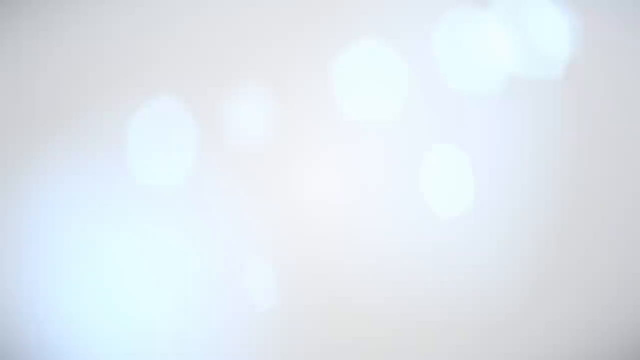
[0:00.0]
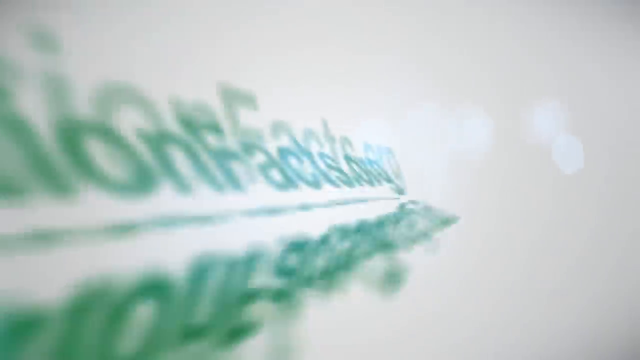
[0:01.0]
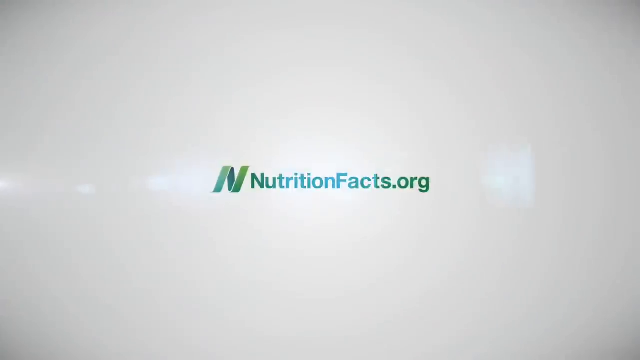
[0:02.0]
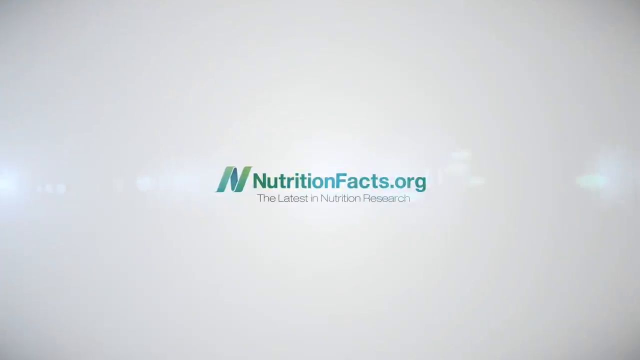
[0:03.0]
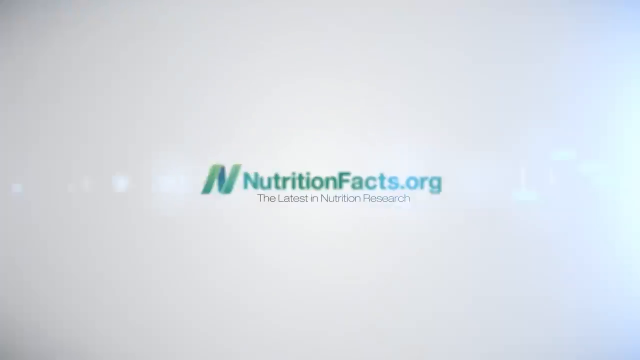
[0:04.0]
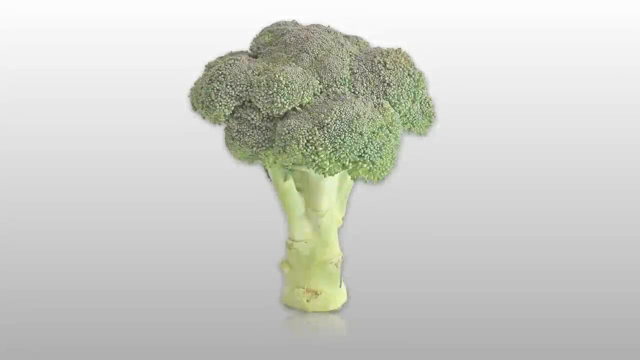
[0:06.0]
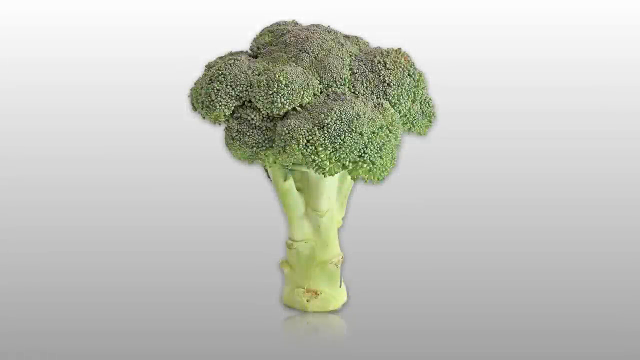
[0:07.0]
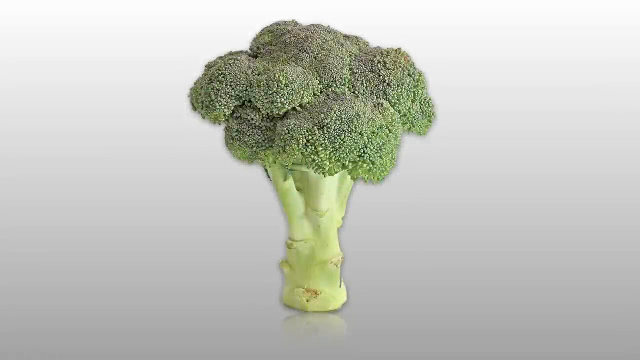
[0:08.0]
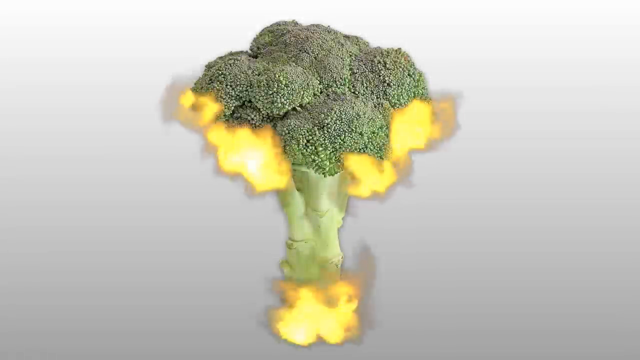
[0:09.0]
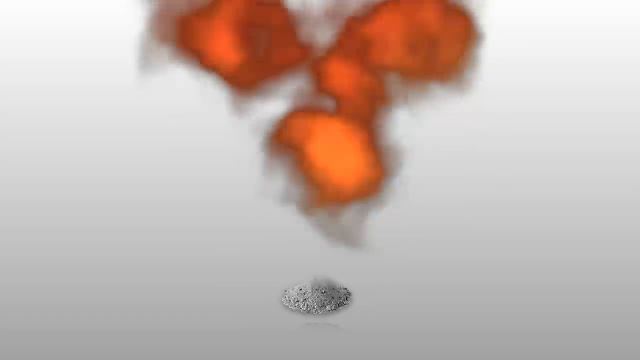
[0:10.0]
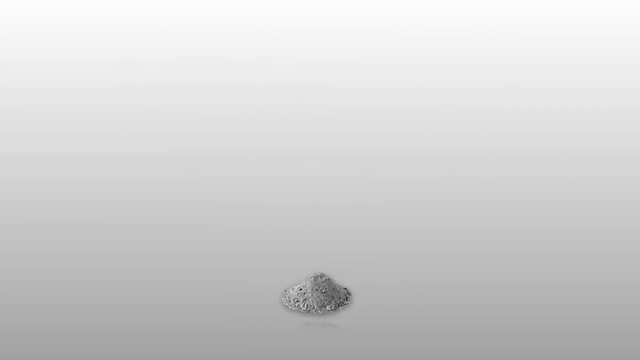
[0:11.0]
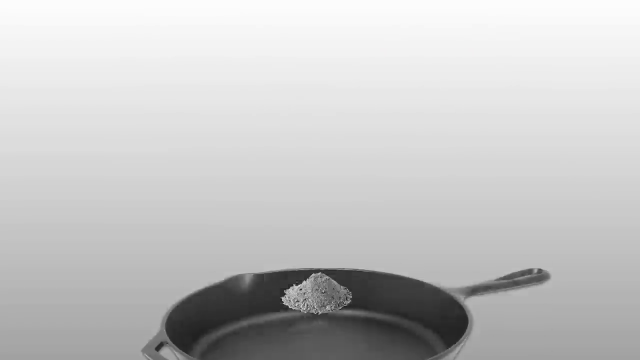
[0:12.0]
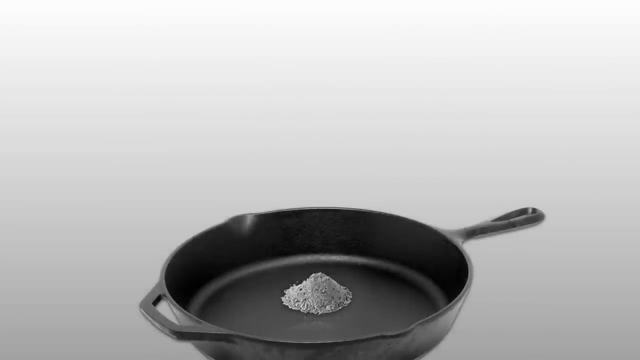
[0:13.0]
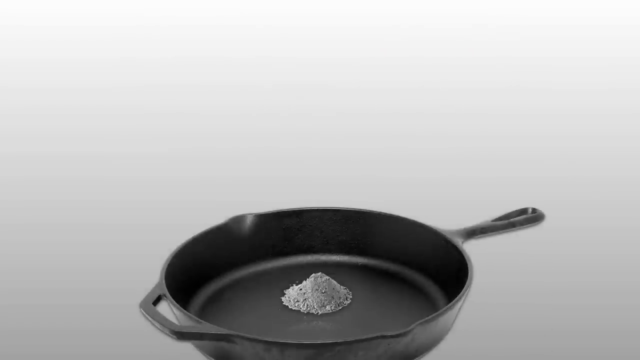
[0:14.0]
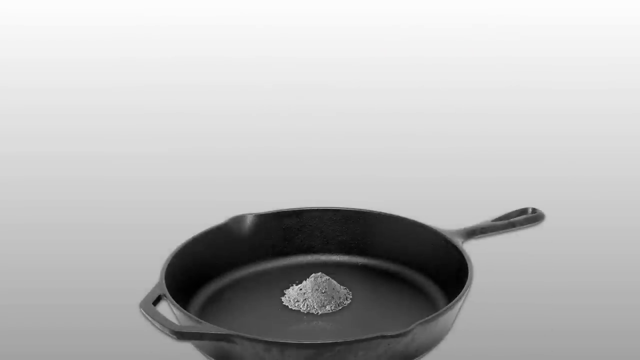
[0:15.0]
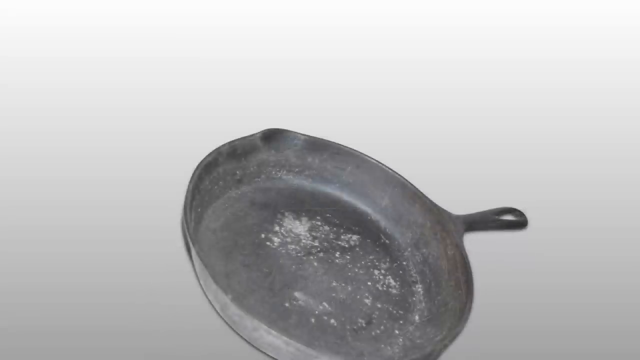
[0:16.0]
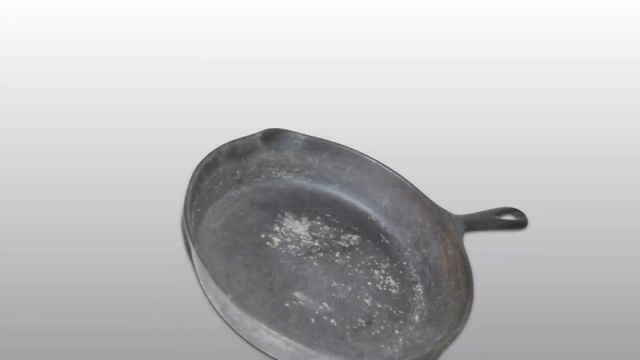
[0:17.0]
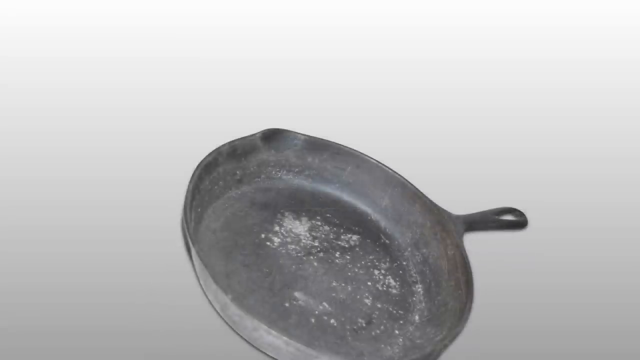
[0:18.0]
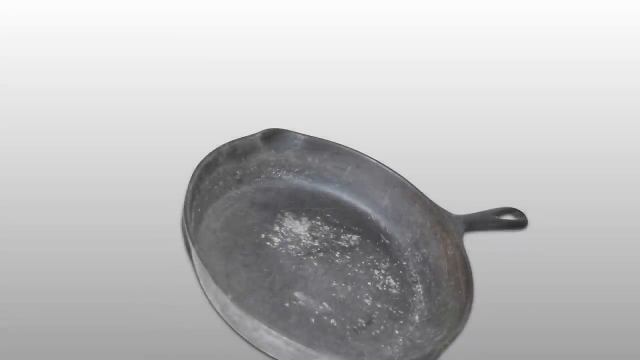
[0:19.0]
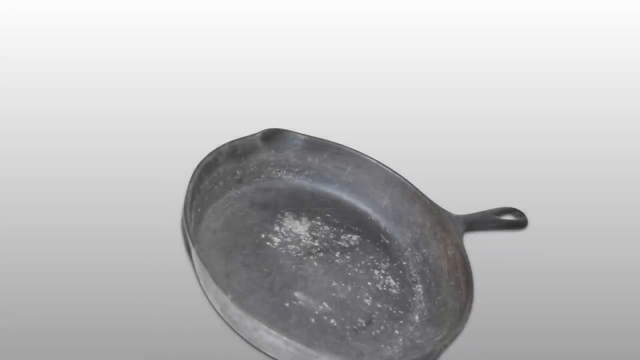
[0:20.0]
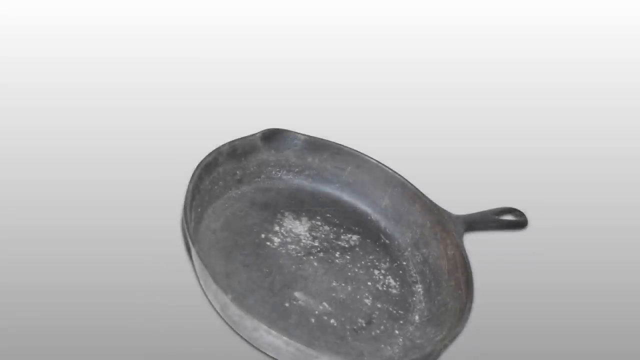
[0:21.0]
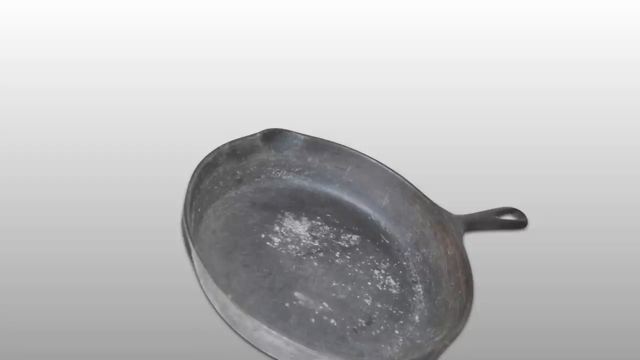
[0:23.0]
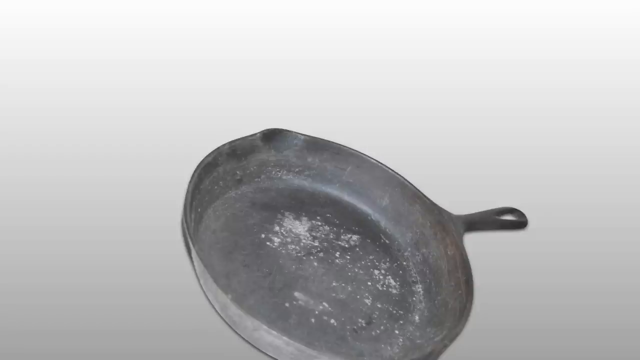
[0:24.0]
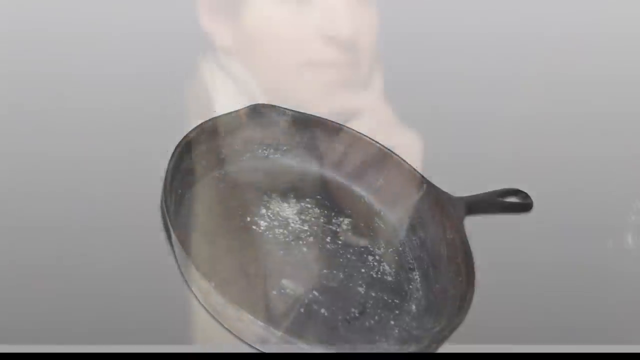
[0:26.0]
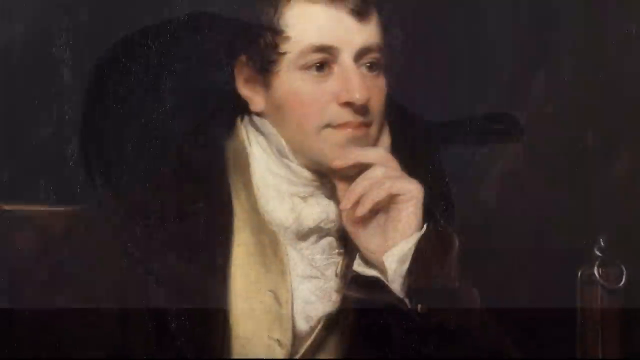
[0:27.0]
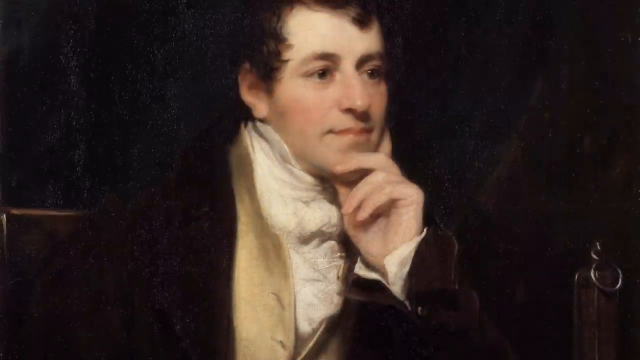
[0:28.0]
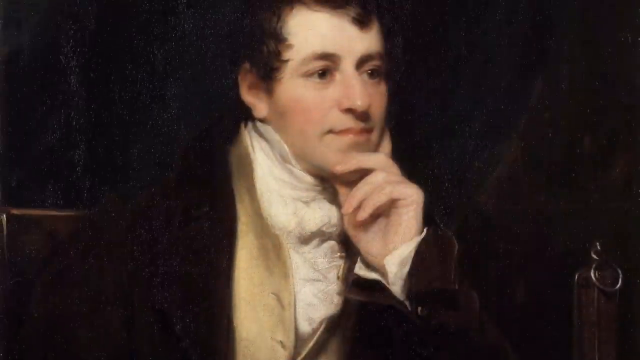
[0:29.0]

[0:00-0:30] The video opens on a white screen with green text reading "NutritionFacts.org," and right beneath it, "the latest in nutrition research." It transitions to a grayish screen with a stalk of broccoli in the center, the only thing on the screen; the florets are a darker green and the stem is a lighter green. The broccoli goes up in flames and disappears from the screen, leaving only ashes. The ashes are put into the middle of a black cast iron skillet. The skillet is then turned over to the side and the ashes can no longer be seen; the skillet looks well used, scraped up, faded and discolored in areas as if it has been used many times. The next screen shows a man in a very old-looking picture, judging by his clothes and hair. He wears black, tan and gold and sits with his hand on his face, looking as if he is in deep thought.